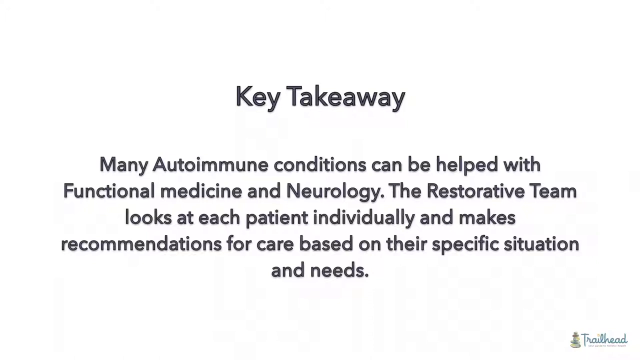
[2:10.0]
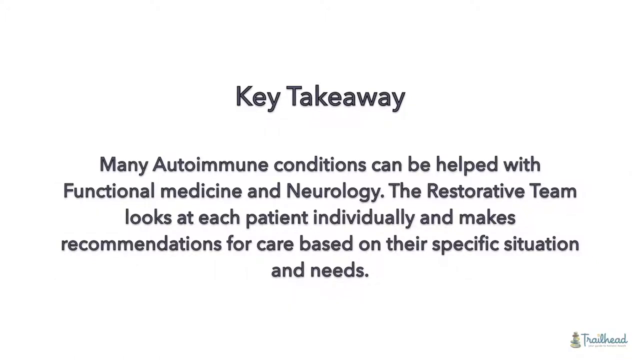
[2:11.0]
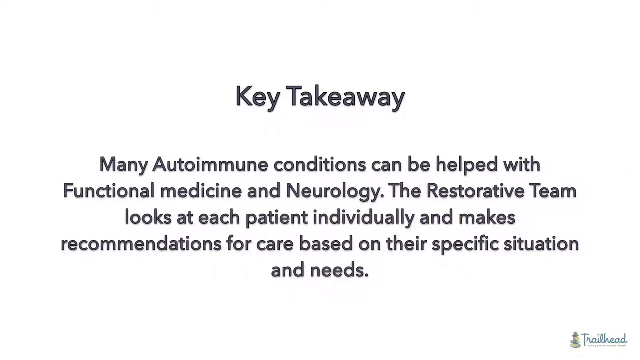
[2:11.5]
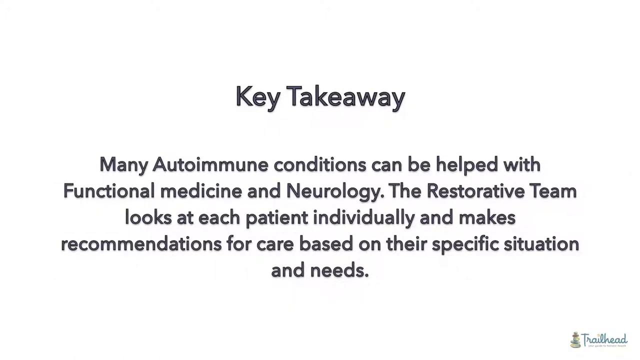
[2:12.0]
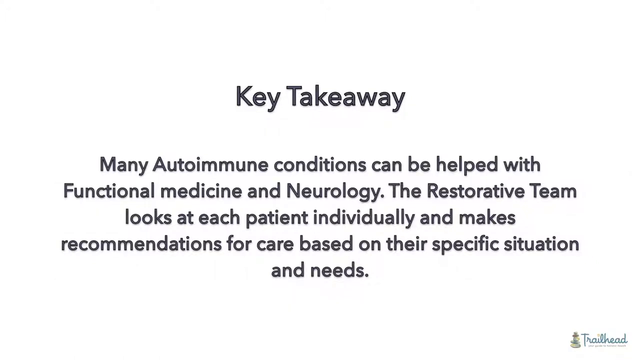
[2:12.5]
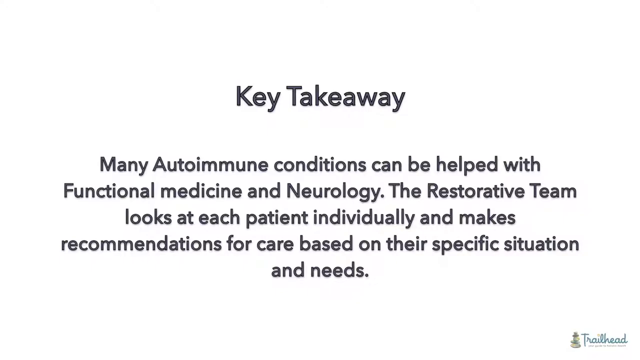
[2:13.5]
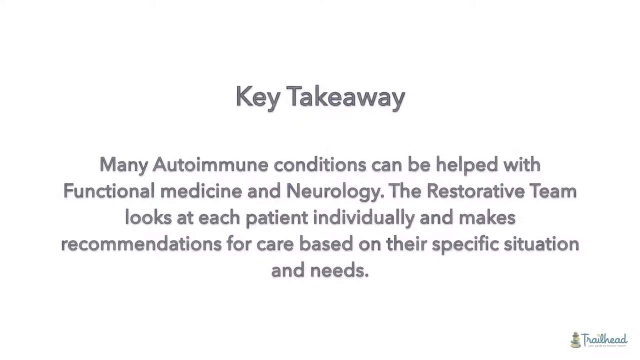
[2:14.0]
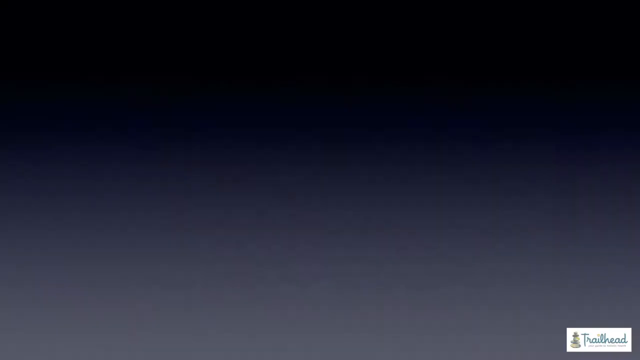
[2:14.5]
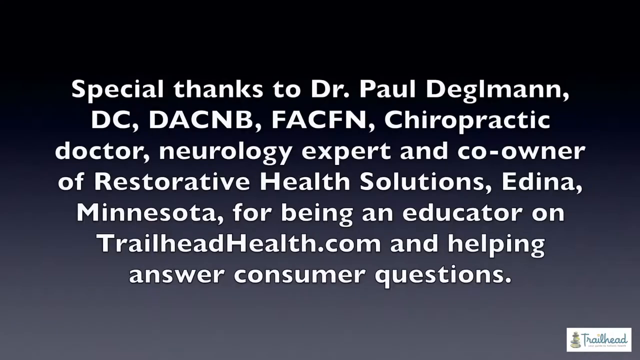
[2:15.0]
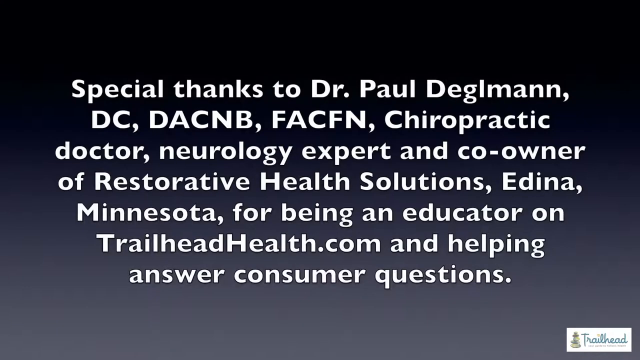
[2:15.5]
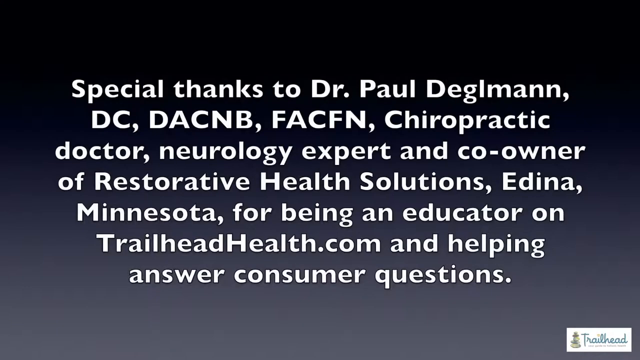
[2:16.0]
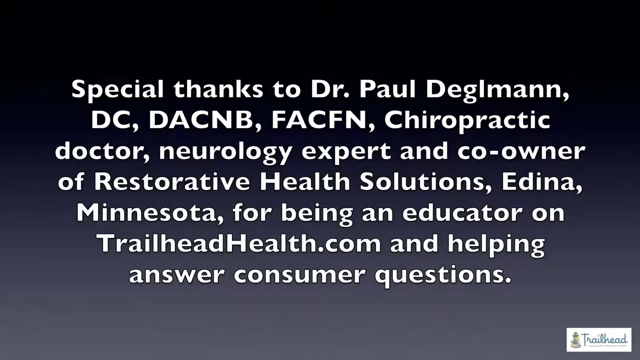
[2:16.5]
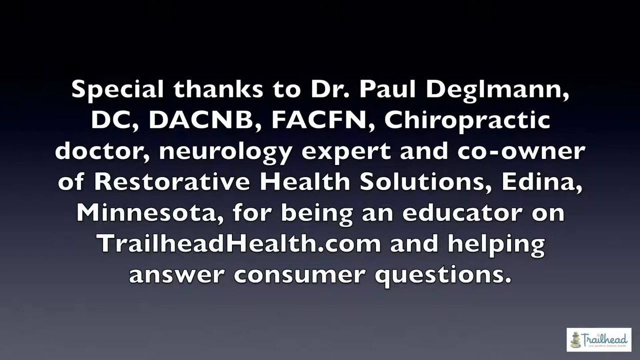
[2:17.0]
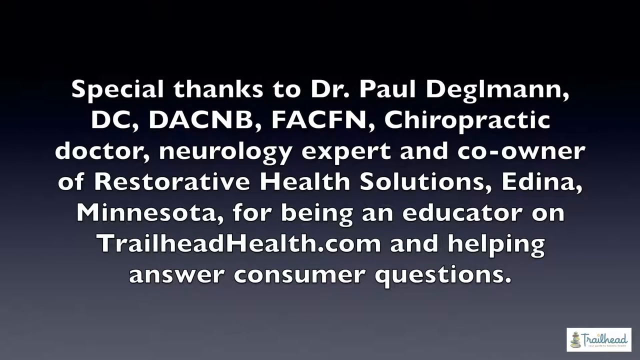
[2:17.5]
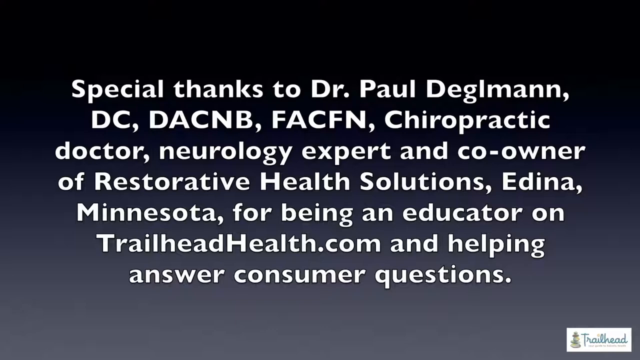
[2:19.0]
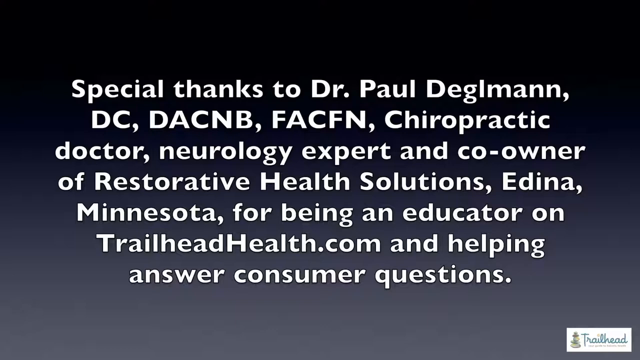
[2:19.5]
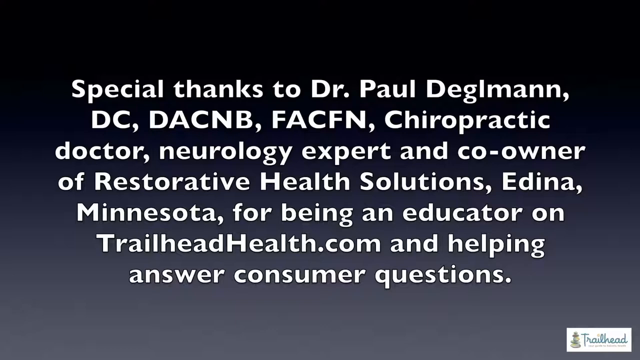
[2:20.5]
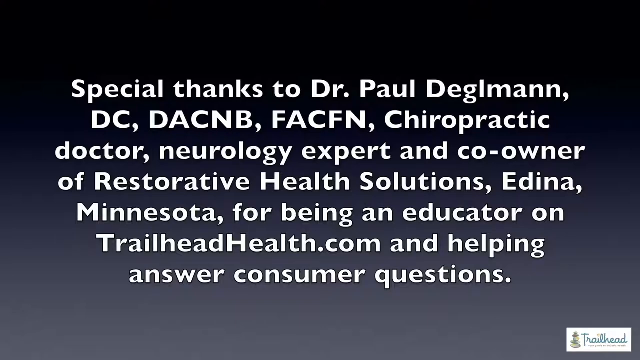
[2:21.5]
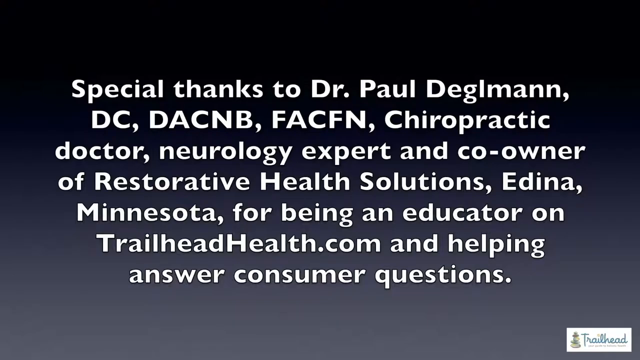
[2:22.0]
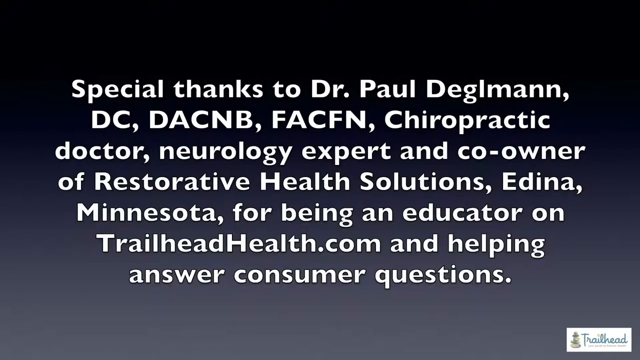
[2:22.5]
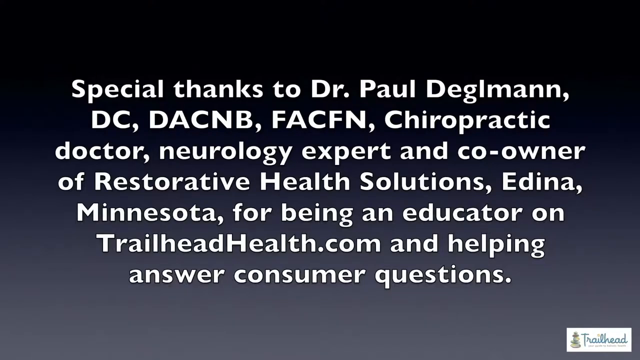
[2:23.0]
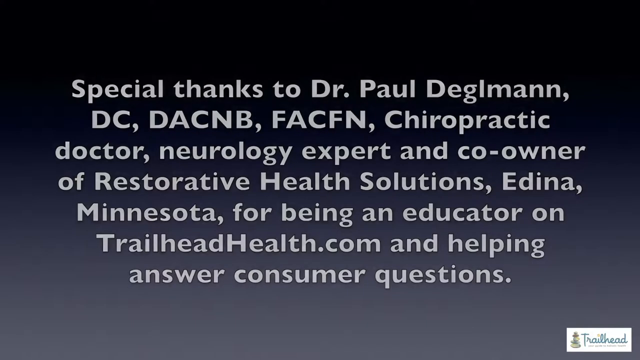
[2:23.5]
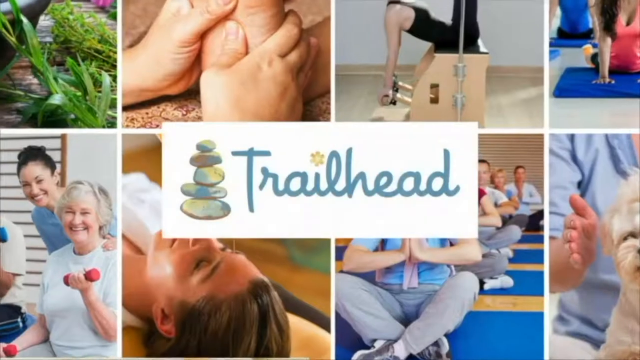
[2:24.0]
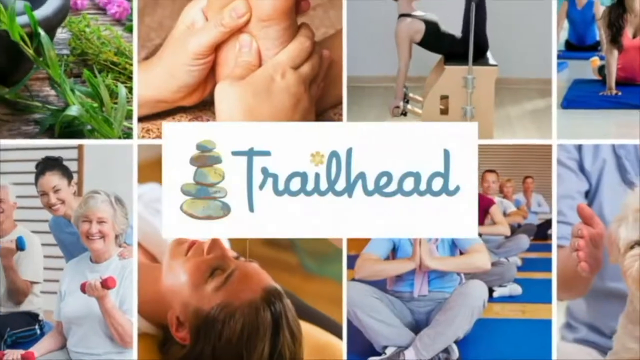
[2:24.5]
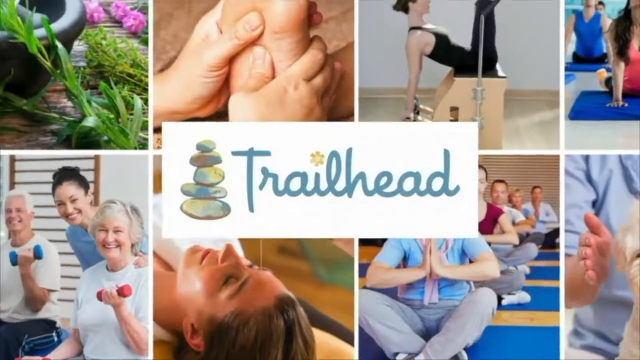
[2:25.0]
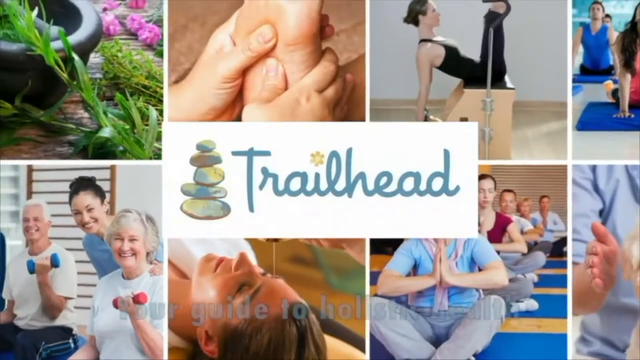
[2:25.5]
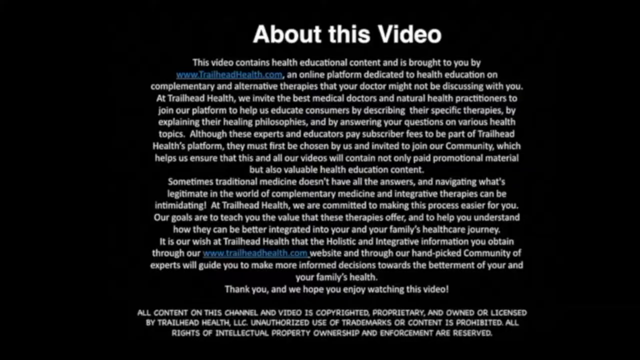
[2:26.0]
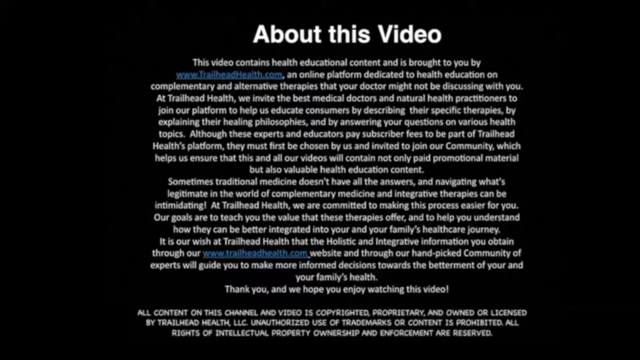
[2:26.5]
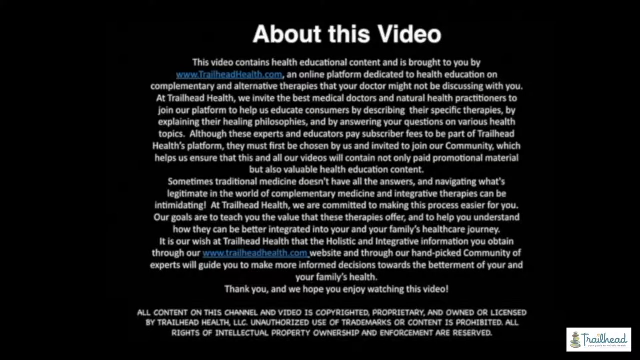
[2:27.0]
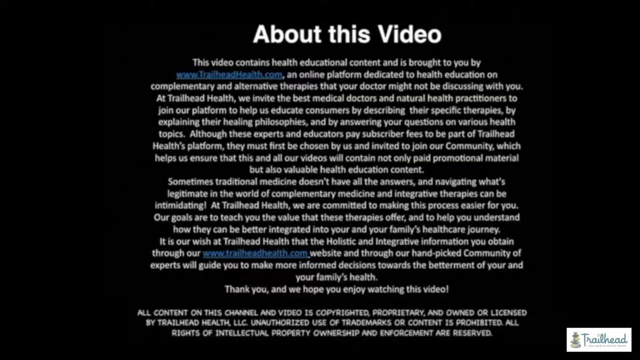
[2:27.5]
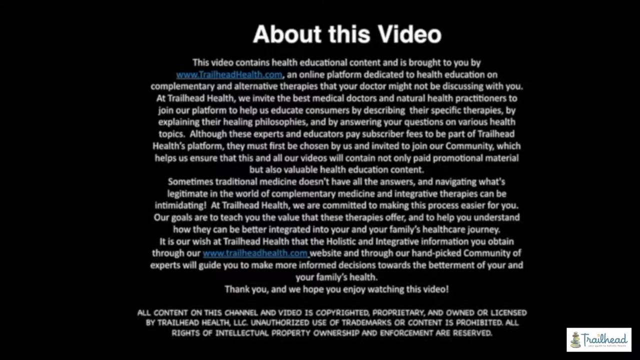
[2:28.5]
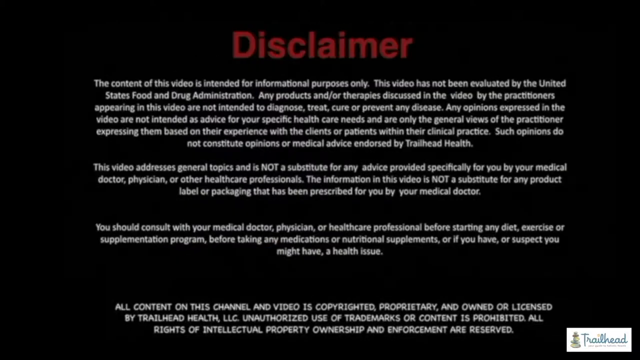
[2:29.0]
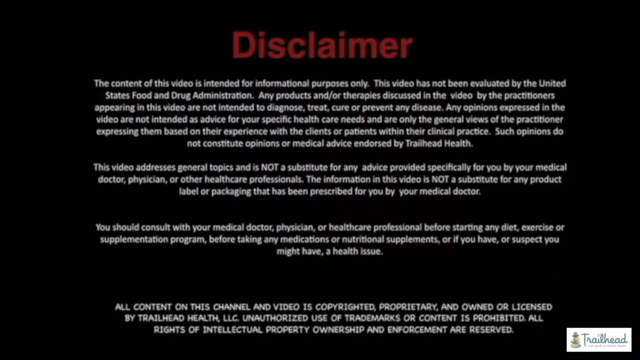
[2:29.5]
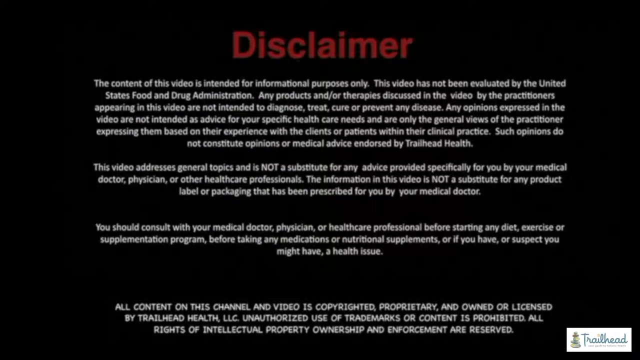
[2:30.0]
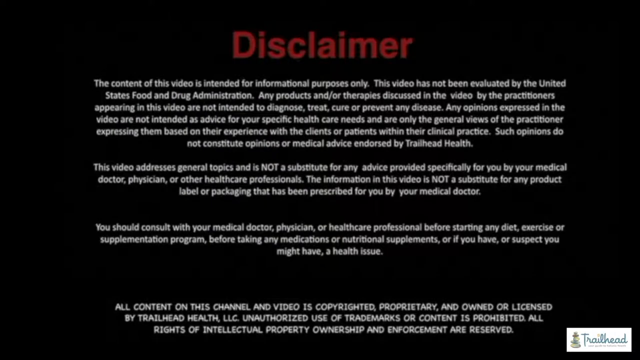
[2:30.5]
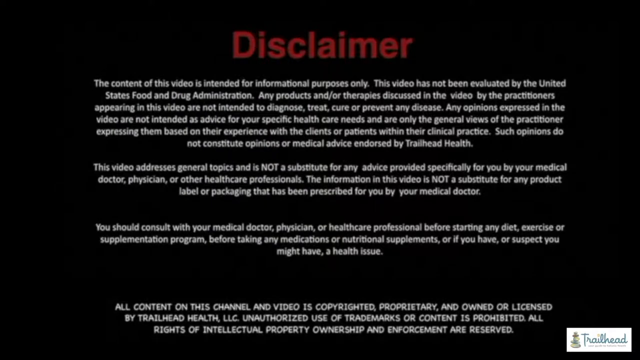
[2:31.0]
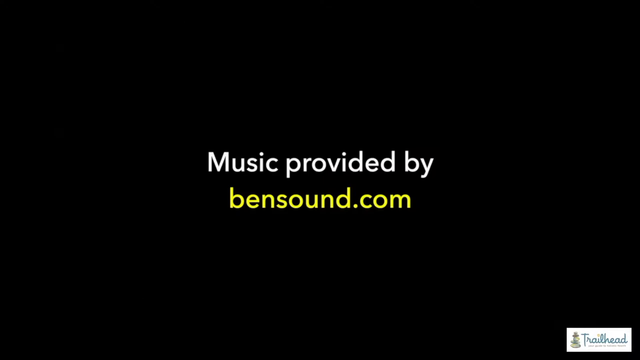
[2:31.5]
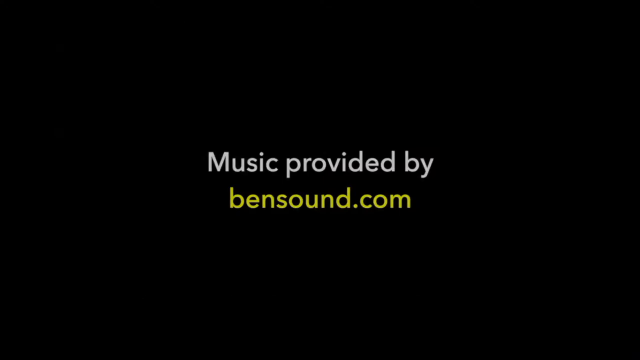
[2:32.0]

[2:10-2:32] A very light gray screen shows dark, bolded black text that says "many autoimmune conditions can be helped with functional medicine and neurology. The restorative team looks at each patient individually and makes recommendation care based on the specific situations and needs of the individual." The next screen appears to be a credit screen for the presentation, giving "special thanks to Dr. Paul, neurology expert and co-owner of Restorative Health Solutions in Edna, Minnesota, for being an educator and helping to answer consumer questions," and also mentioning talking with different patients about treatments for autoimmune disease. A final screen is a split screen with multiple screens of different individuals, including a mom and a daughter and a dad and a son. The video then goes to the final credits, "about this video," in small white text on a black screen.